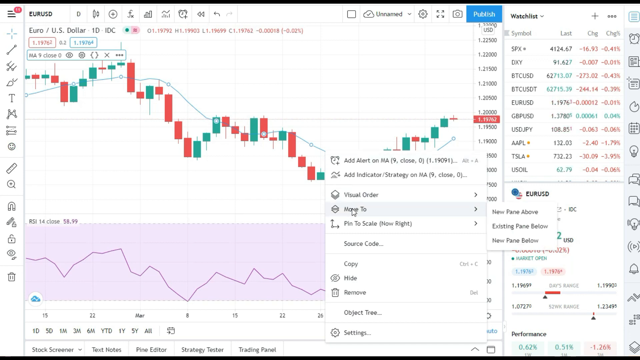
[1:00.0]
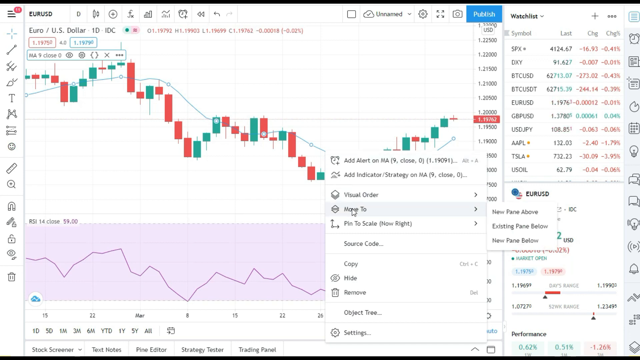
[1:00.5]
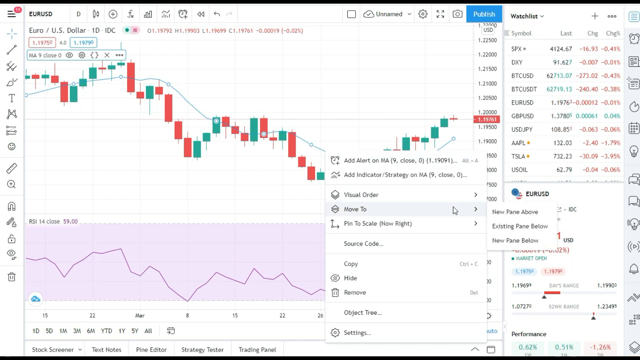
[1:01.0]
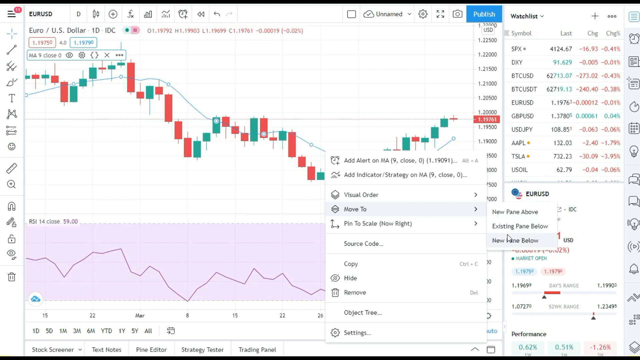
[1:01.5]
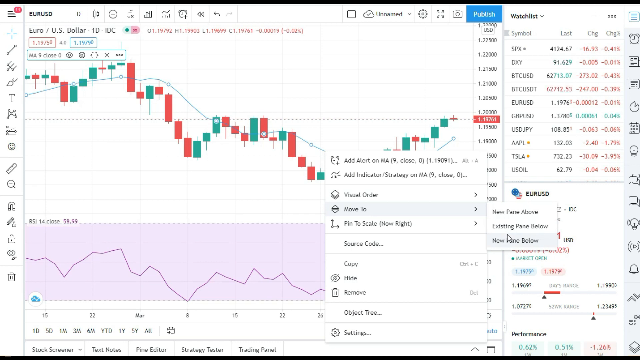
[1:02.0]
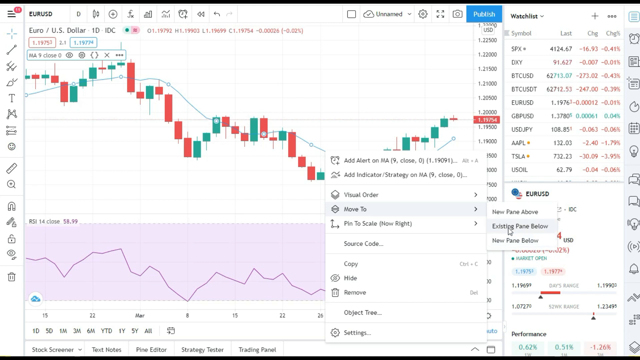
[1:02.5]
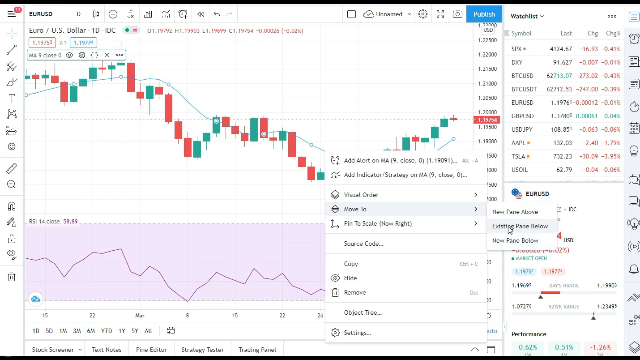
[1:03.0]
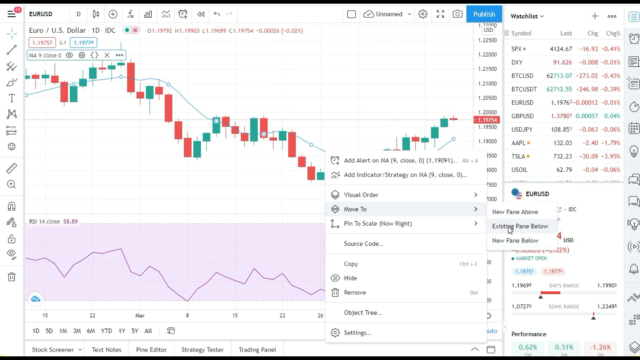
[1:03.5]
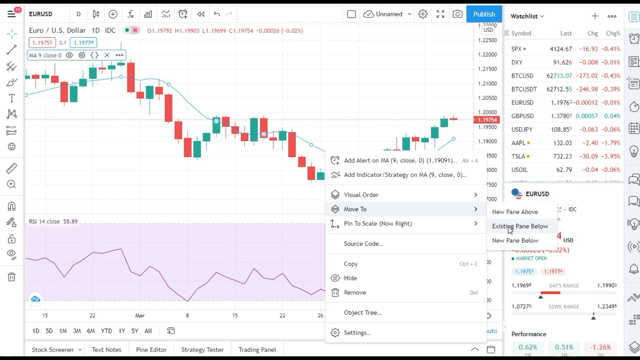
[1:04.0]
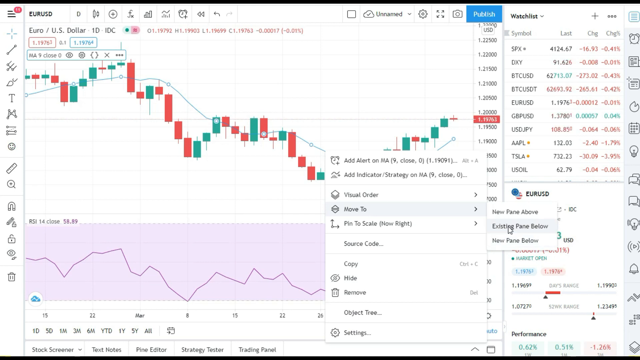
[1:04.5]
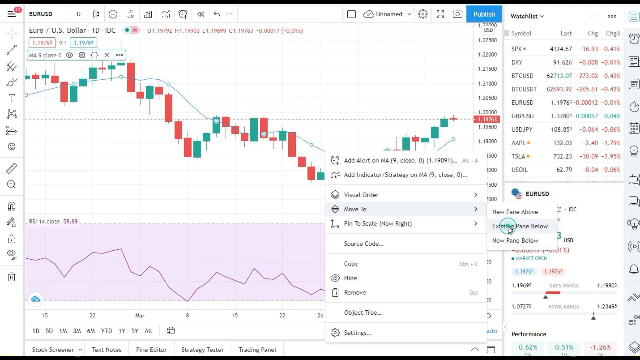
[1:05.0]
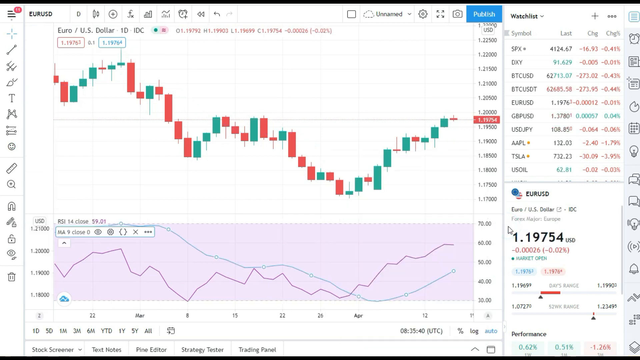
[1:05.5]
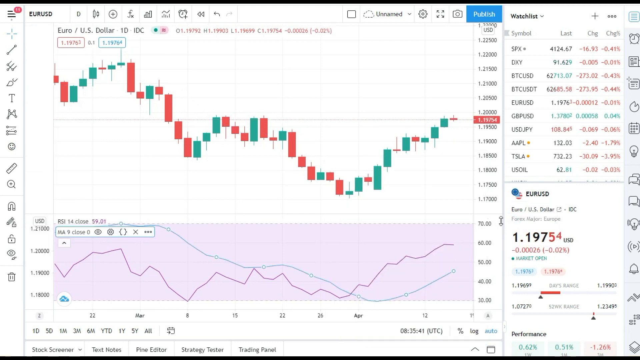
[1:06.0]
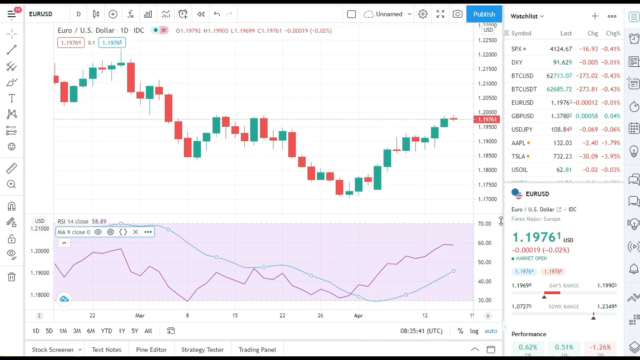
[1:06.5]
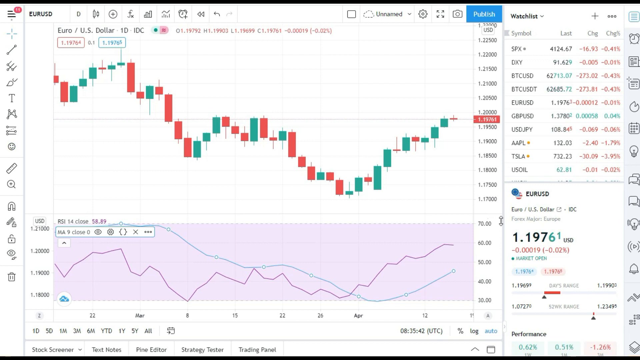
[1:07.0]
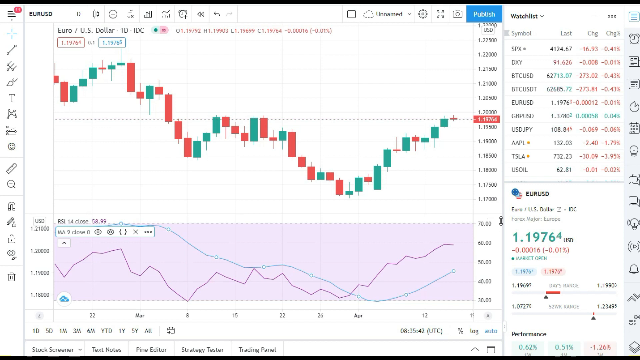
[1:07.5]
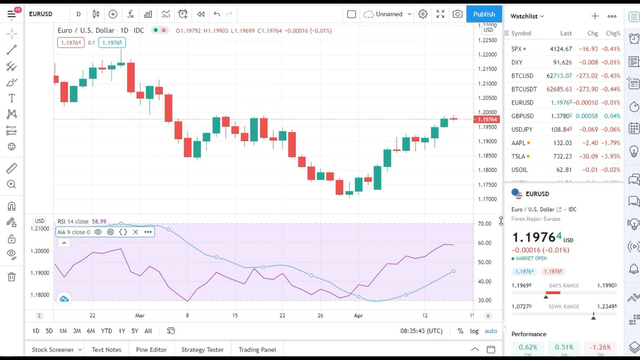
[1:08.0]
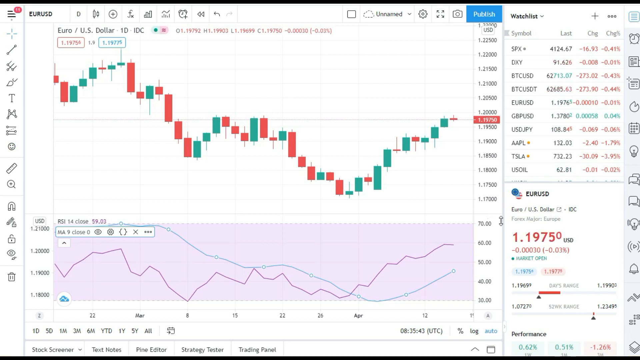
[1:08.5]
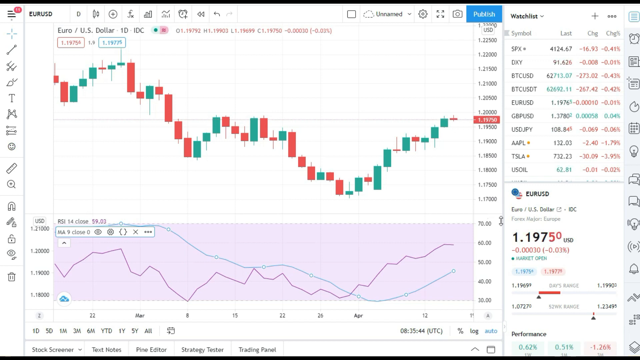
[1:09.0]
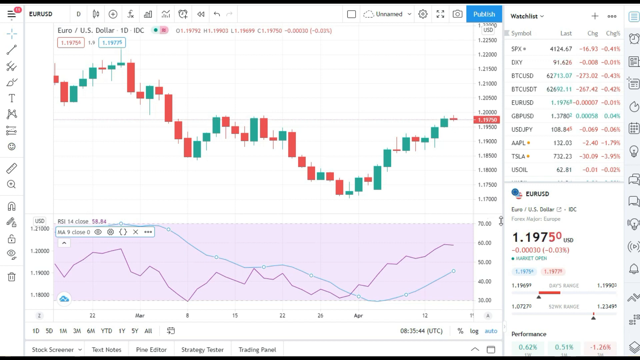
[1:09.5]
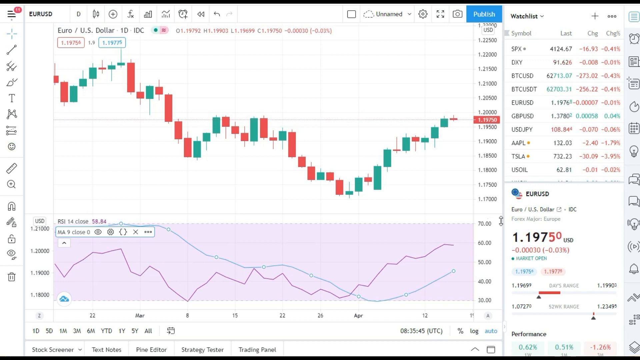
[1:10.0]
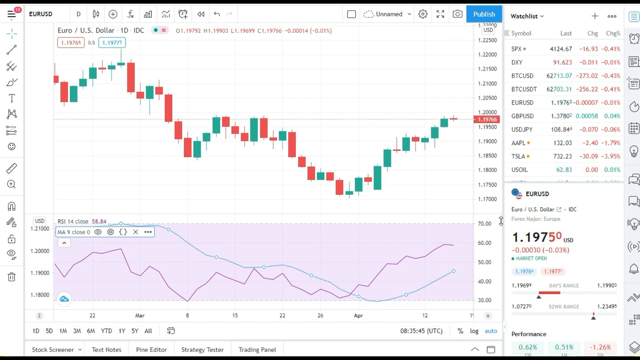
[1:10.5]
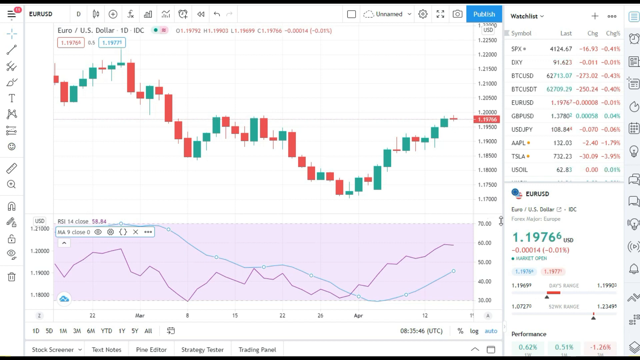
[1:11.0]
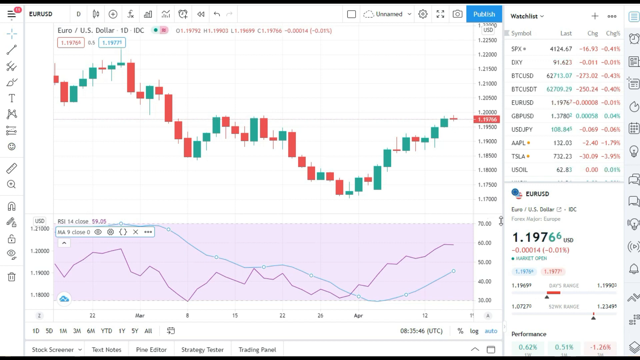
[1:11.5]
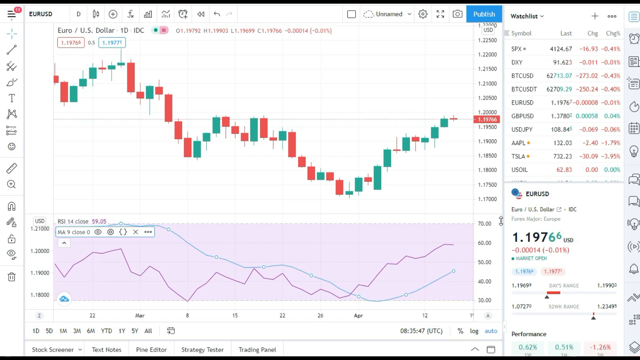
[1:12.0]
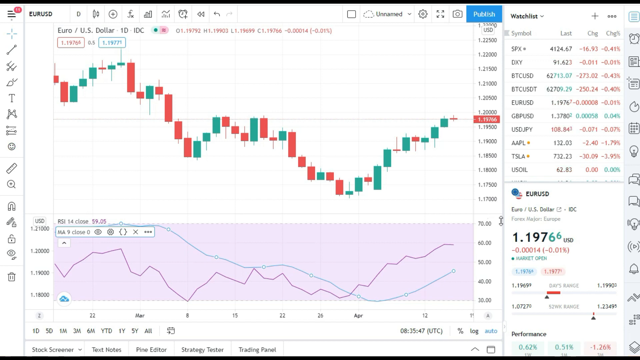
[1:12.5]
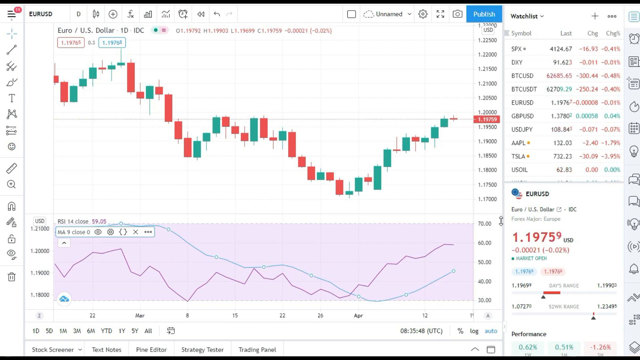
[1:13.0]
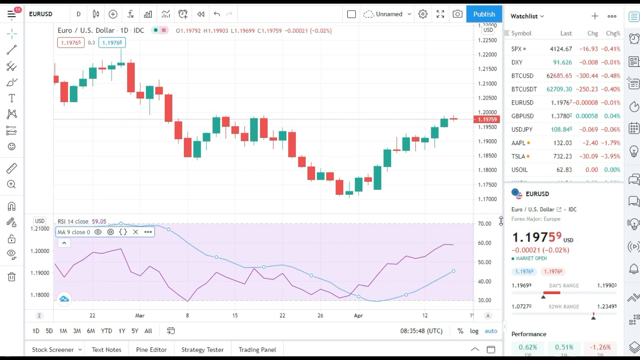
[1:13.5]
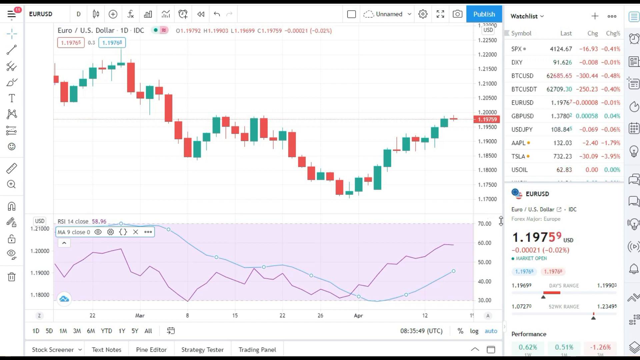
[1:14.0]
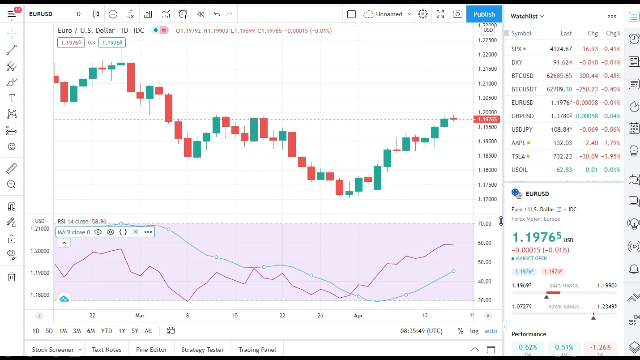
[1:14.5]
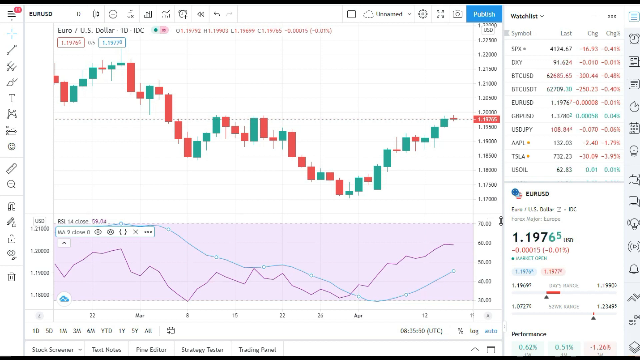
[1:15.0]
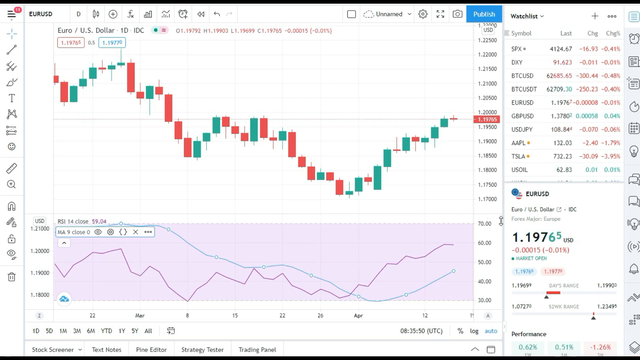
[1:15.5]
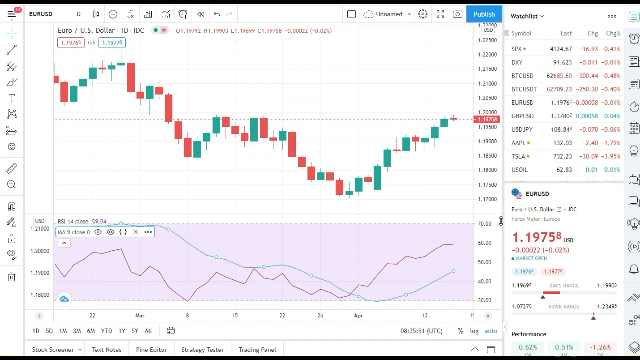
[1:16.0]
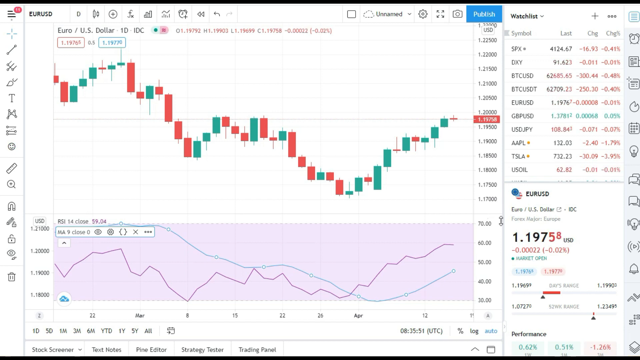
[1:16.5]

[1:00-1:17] The rates move from 1.95 to 1.96.6. Candlesticks are shown, some in green and others in white. A menu lists options: "add alert on MA, add indicator, visual order, move to, pin to scale, source code, copy, hide, remove, object, tree". Currencies are listed: BTC versus USD, BTC versus USD, EURO versus USD, USD versus Japanese Yen, and US against the oil price. There are also options for watchlist and publish, and very many options overall. A graph shows the volatility of trading, and on the bottom graph there is a green line.